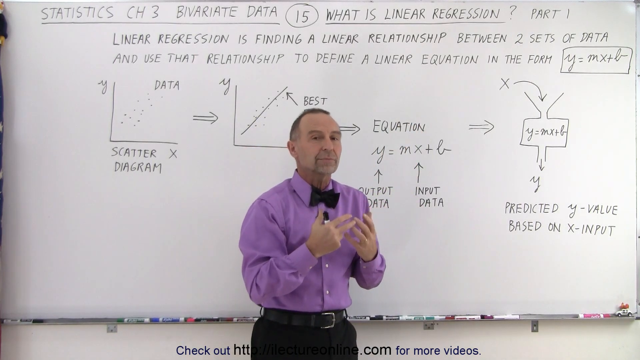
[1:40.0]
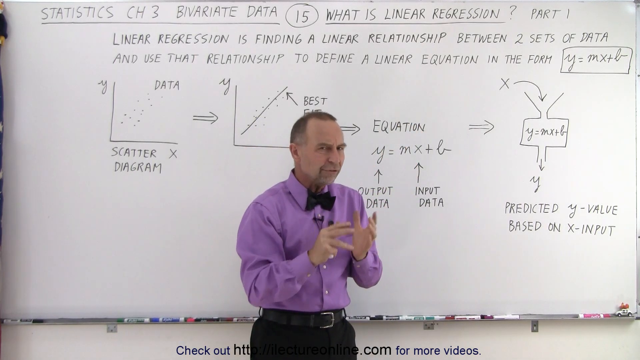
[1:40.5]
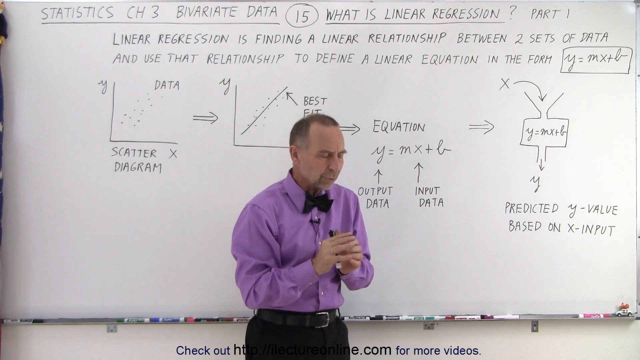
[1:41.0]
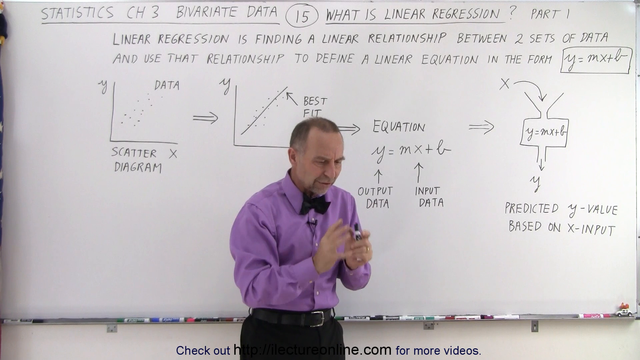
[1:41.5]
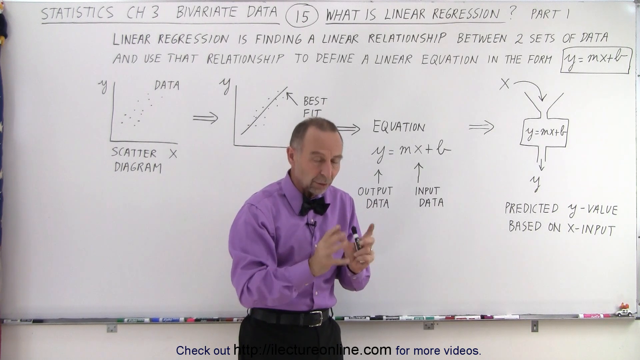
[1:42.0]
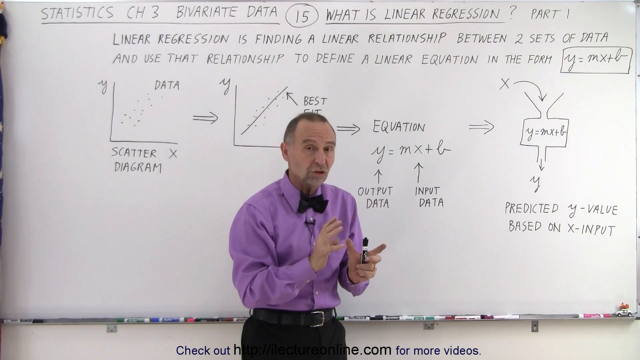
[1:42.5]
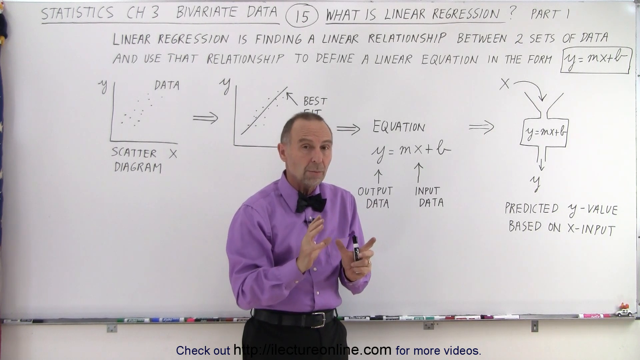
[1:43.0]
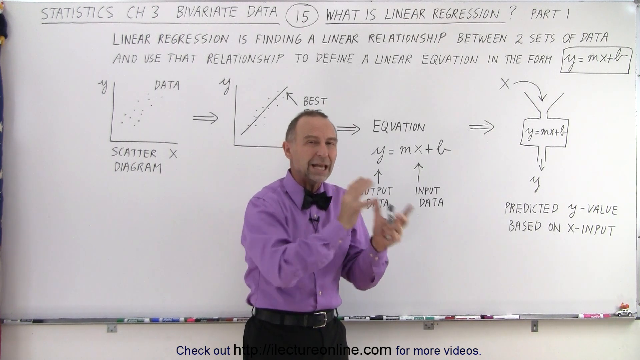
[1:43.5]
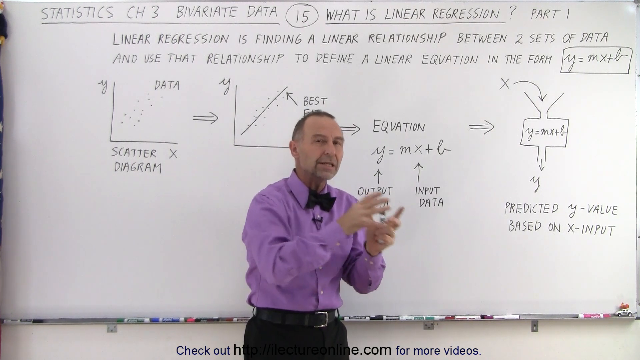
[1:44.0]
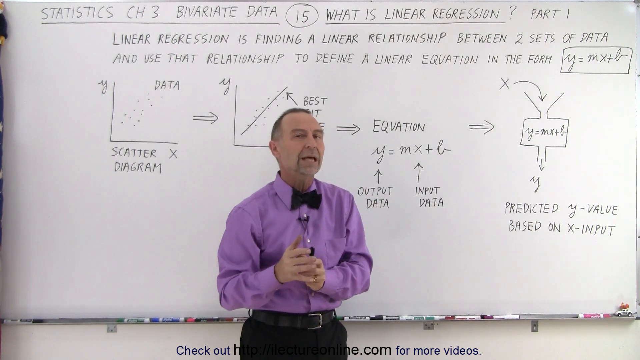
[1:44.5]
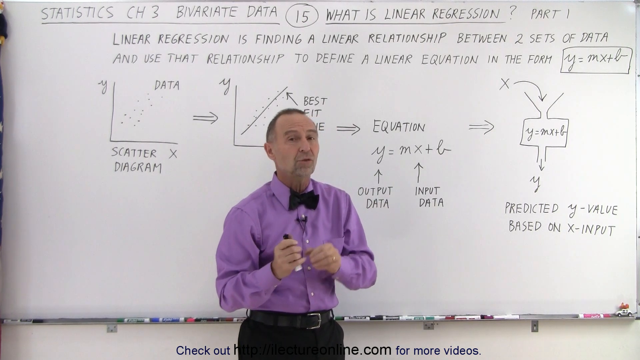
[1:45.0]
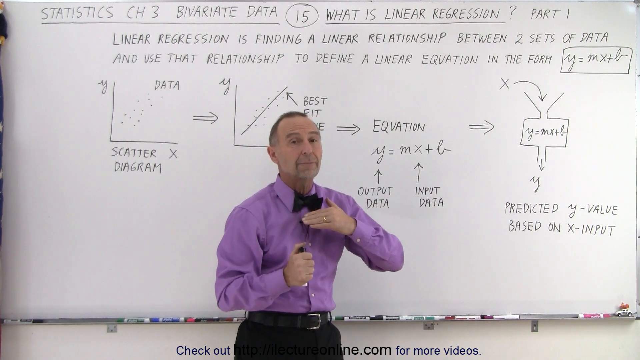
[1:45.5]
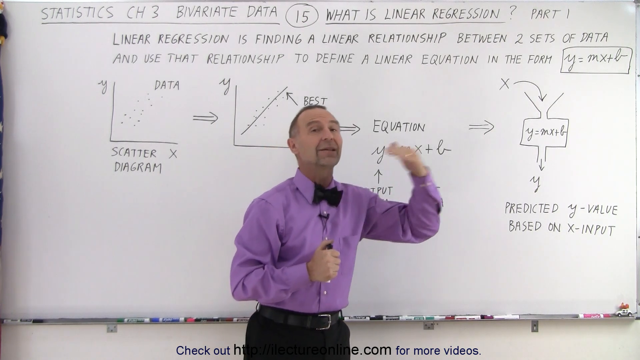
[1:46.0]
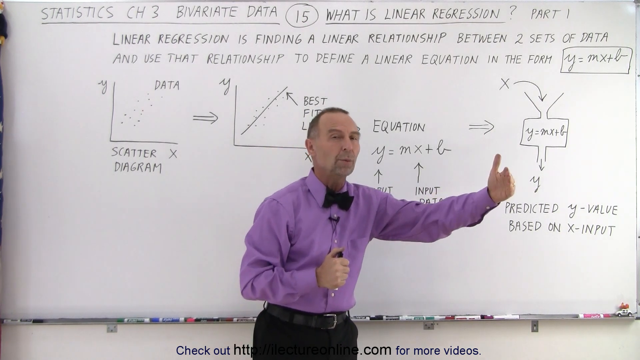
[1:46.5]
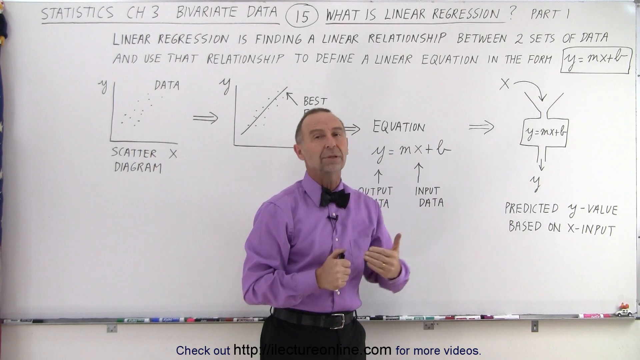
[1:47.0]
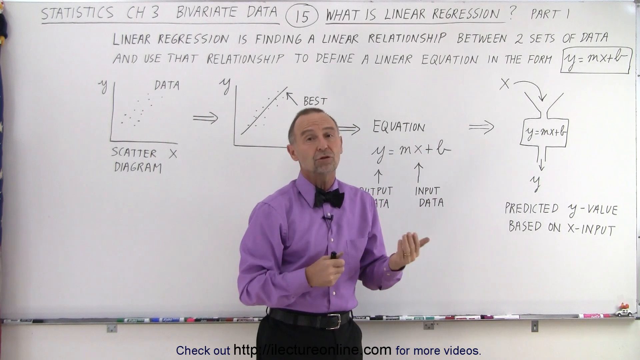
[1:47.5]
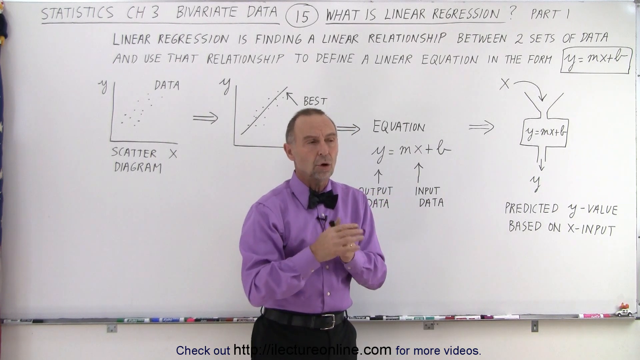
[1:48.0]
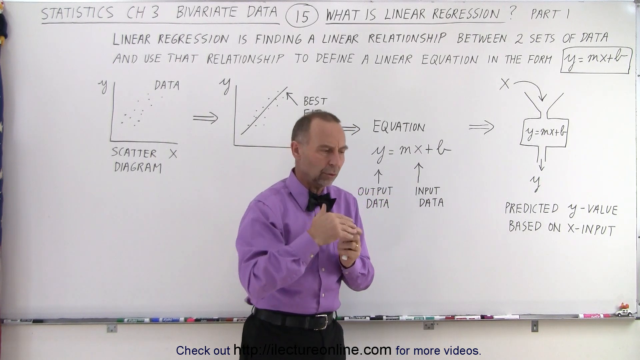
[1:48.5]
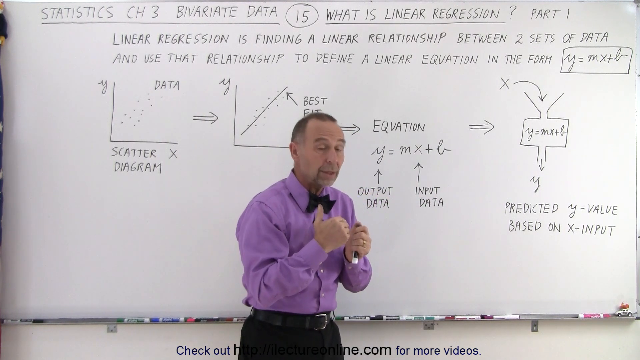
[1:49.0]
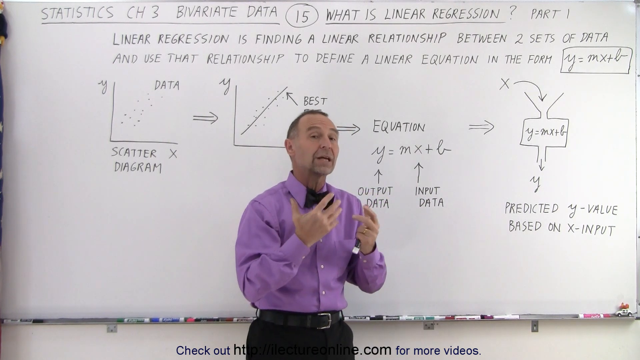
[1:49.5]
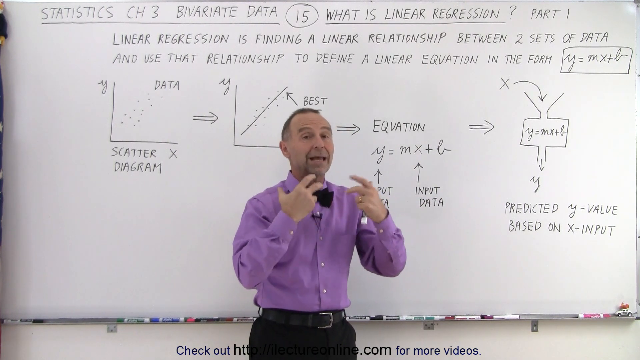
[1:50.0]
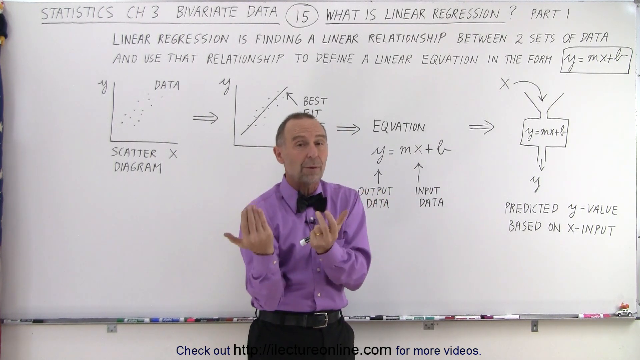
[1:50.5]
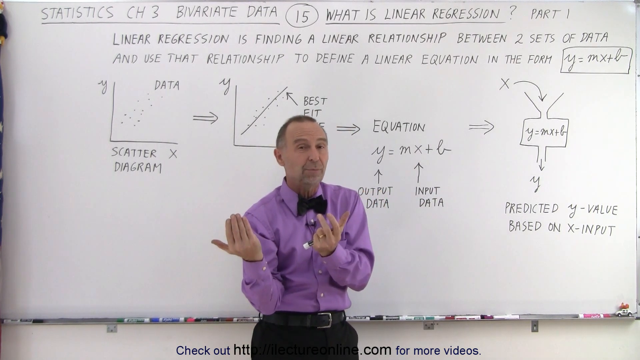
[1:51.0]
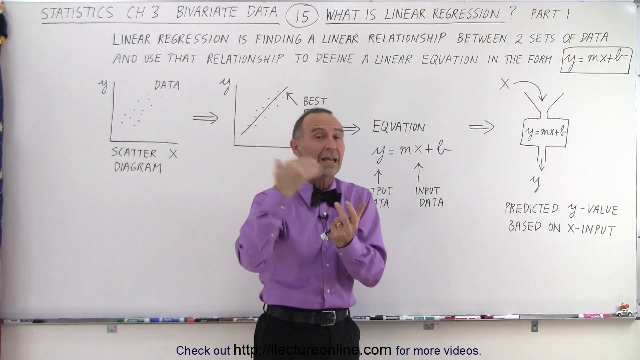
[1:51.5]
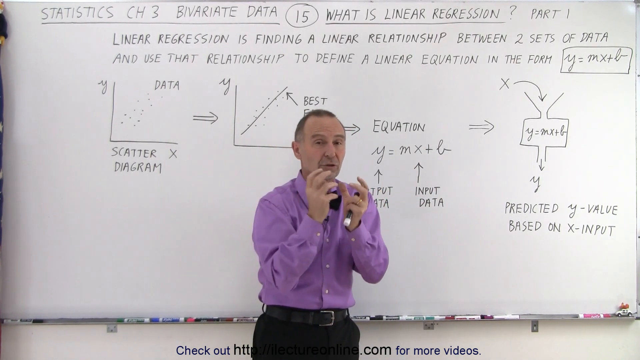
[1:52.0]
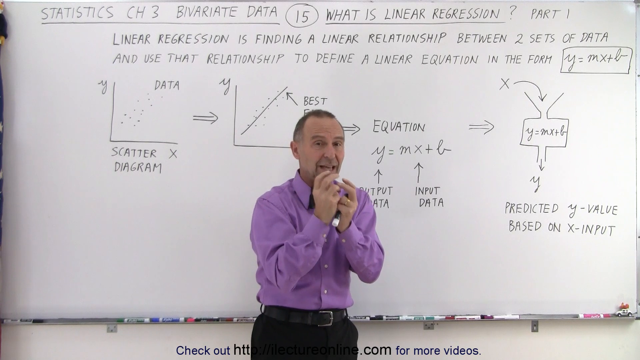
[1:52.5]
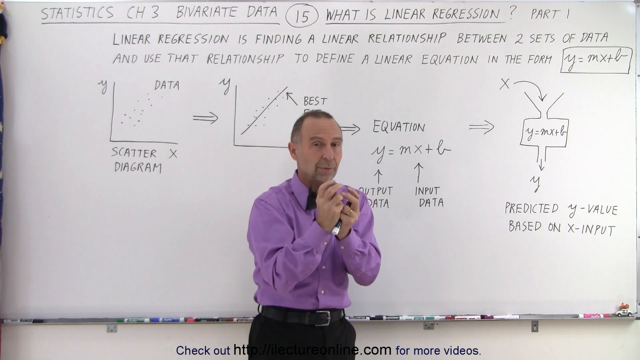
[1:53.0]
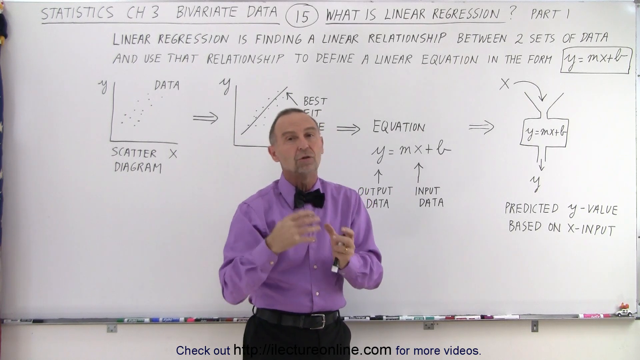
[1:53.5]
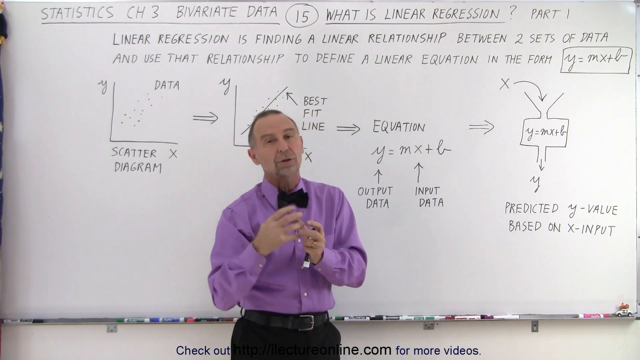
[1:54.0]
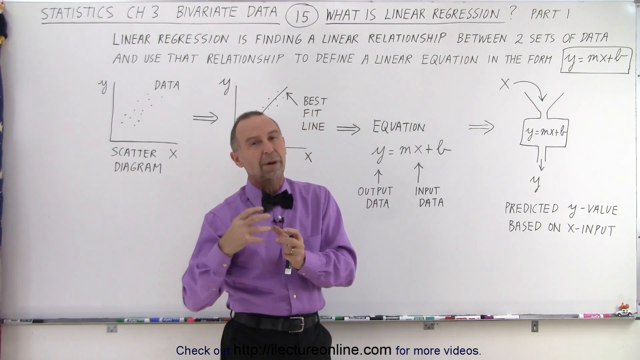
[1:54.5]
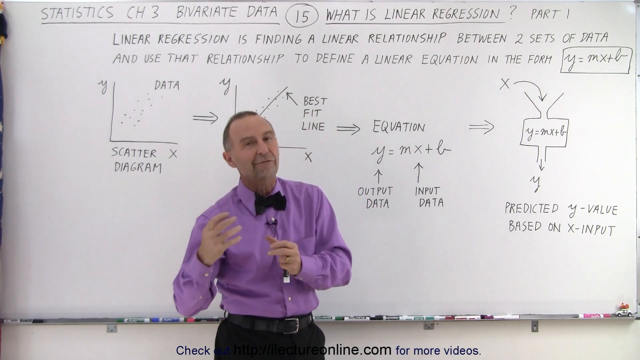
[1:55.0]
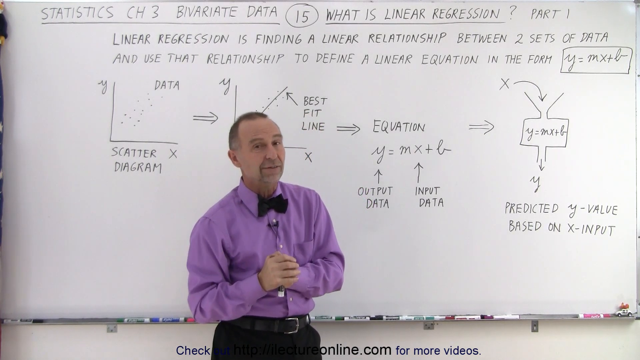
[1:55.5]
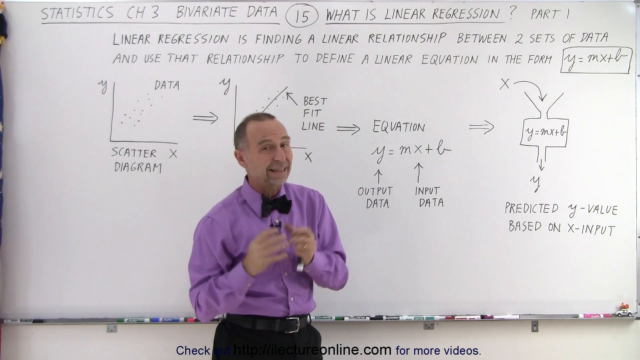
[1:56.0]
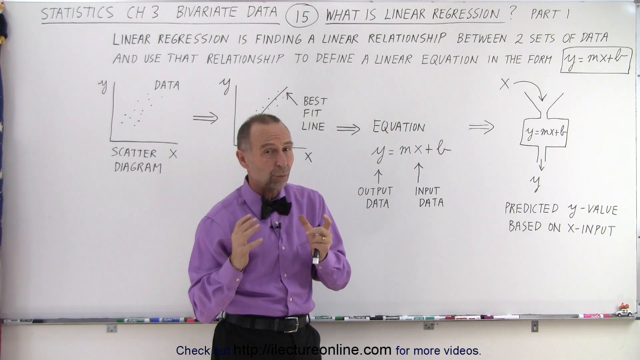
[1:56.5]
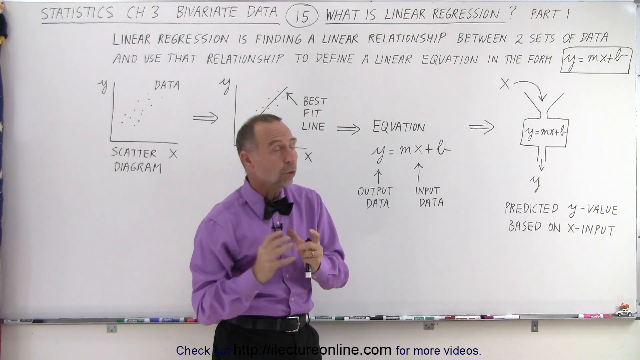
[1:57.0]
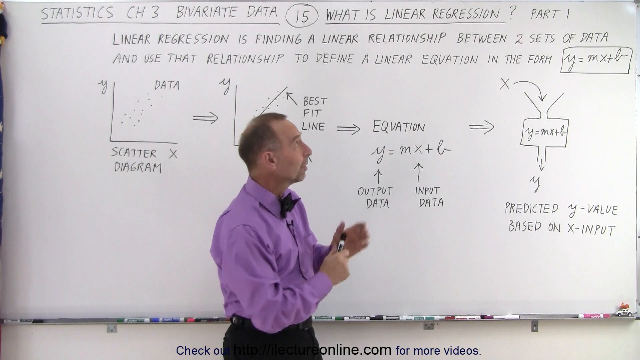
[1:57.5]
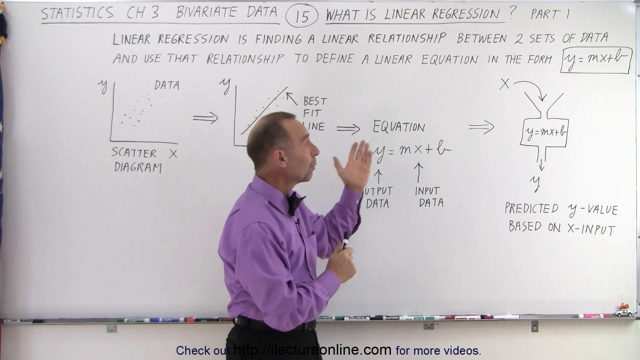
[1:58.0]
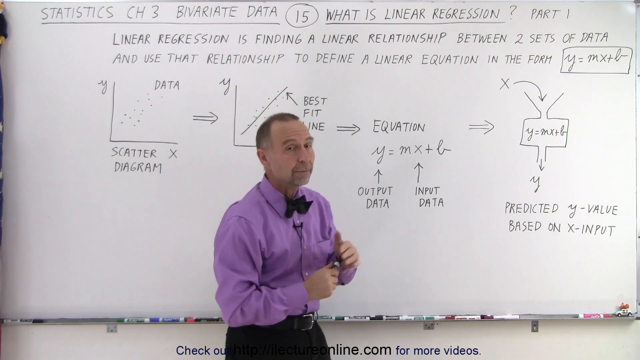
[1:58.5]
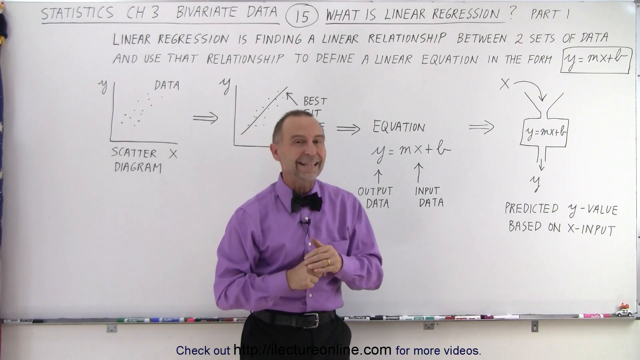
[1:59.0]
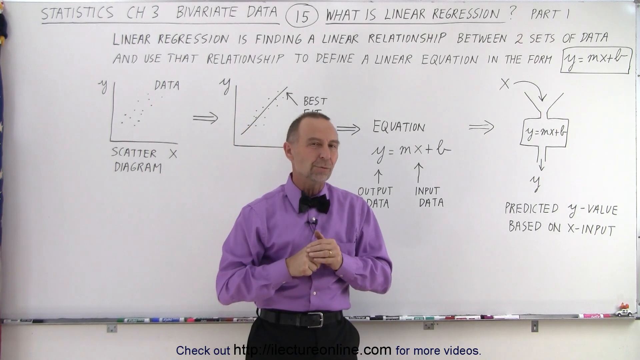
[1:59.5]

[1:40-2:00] The whiteboard is visible more clearly than before. The lecturer is still the only person, with no objects added or missing. The writing on the whiteboard behind him appears to have been done beforehand, as he does not write but explains using his hands. He holds a black marker but does not use it. He explains the last step of the lecture plan, and the board states that this is only part one. The whiteboard remains unchanged; he stays in the same position, moving only an inch, and neither writes nor erases anything.